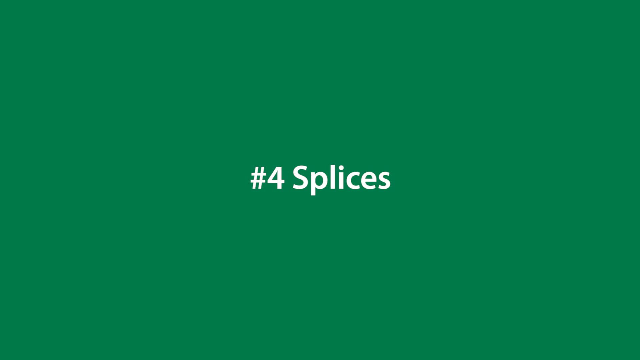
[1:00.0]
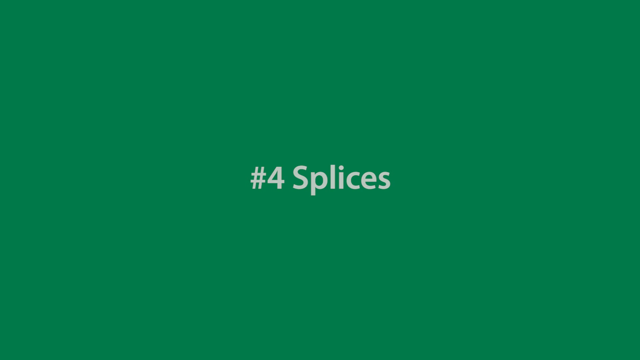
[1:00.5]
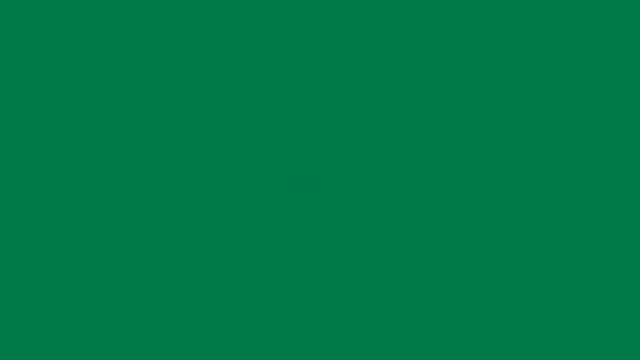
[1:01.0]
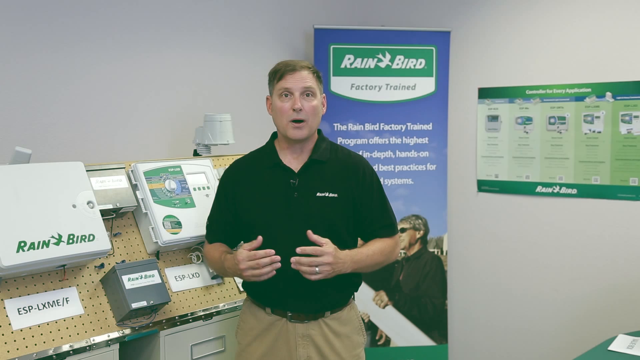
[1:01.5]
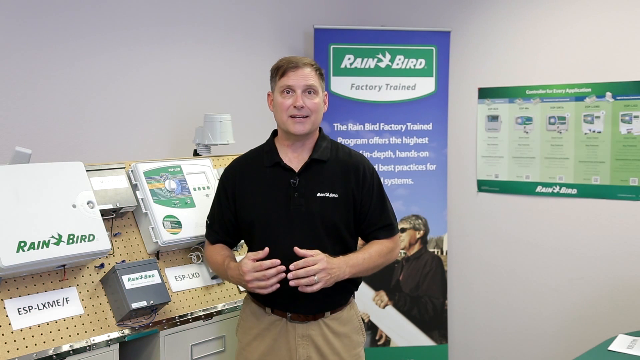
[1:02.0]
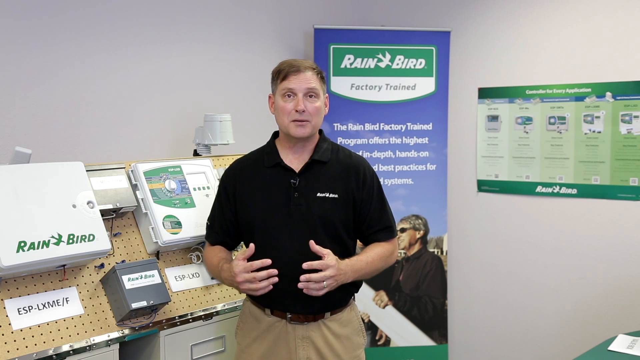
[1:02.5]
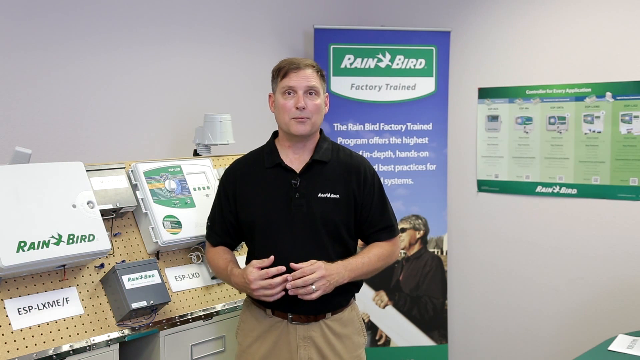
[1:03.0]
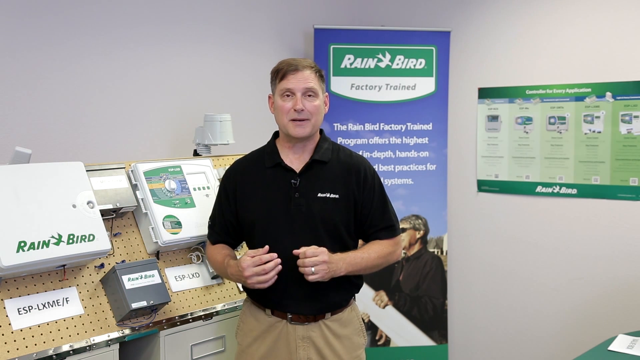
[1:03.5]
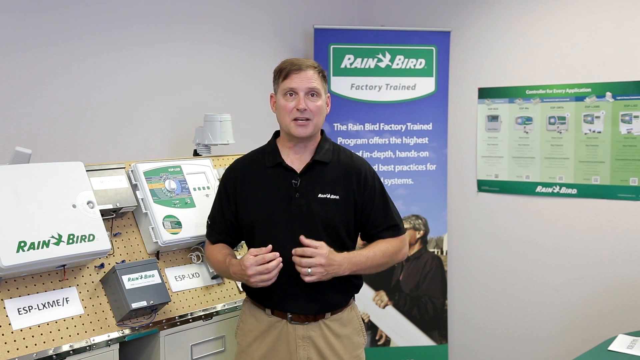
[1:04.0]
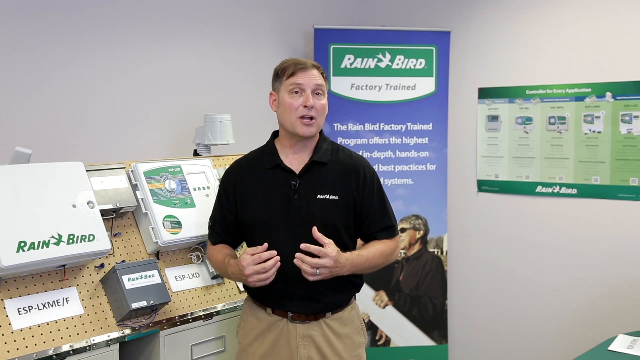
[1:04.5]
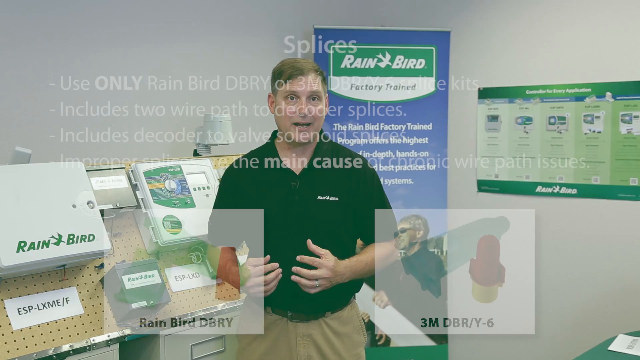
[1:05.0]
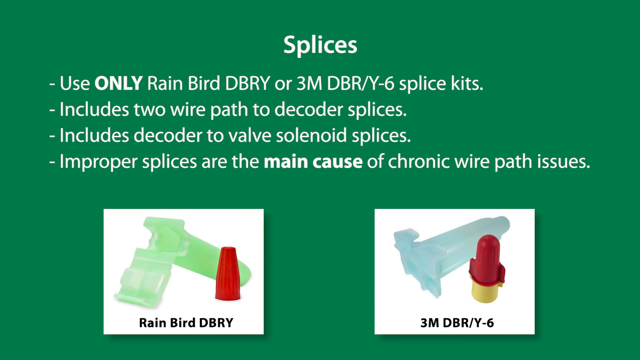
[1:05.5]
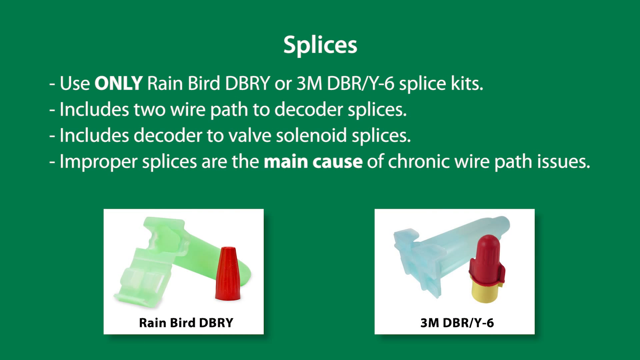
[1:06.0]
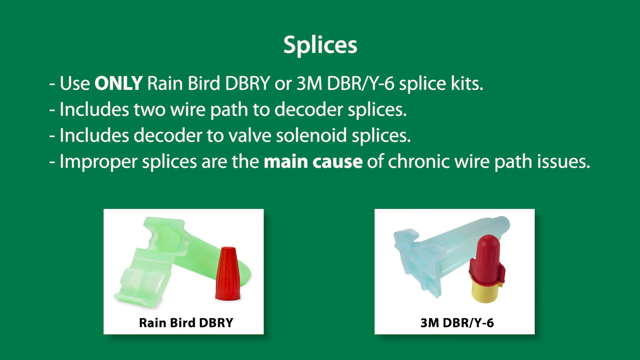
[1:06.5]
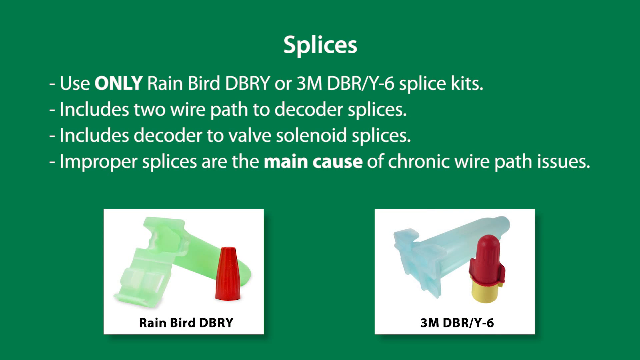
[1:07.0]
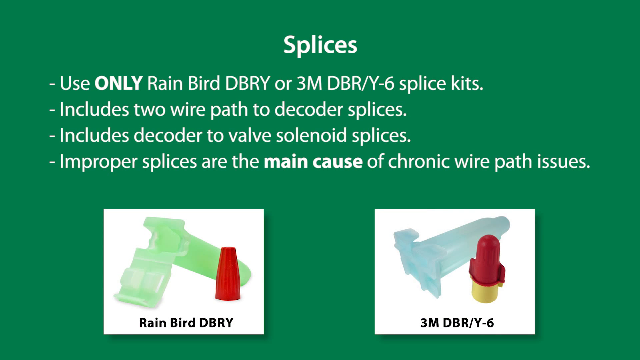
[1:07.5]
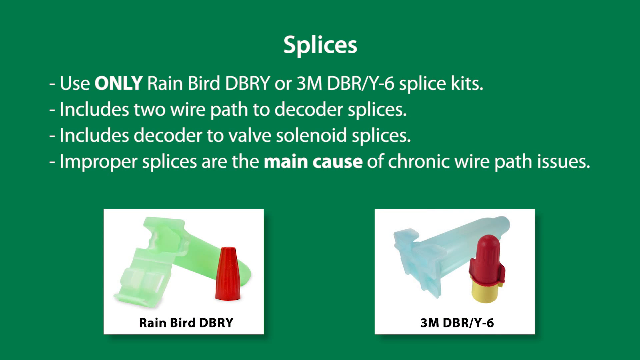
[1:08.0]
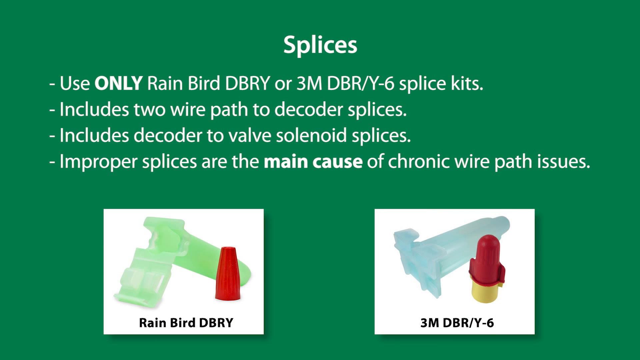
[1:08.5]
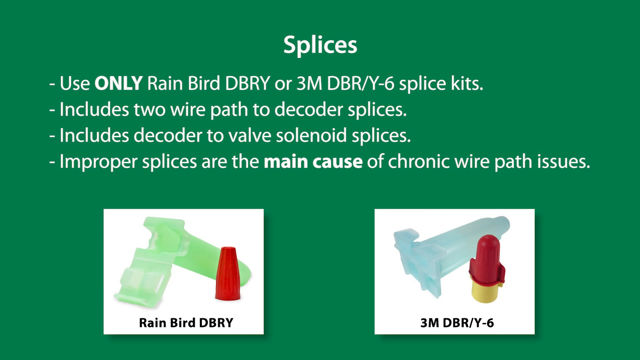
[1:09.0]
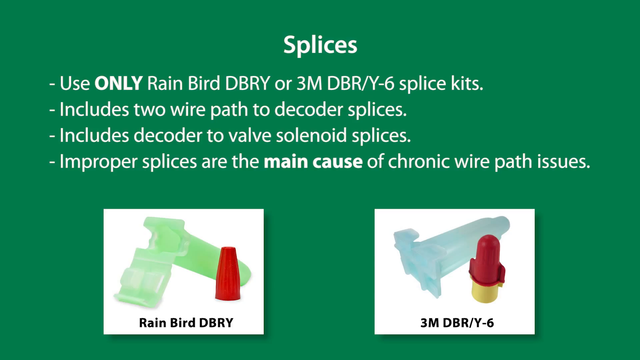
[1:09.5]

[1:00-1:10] A green background screen reads "number four splices." A man speaks to the camera, wearing khaki pants and a black shirt with white writing. He stands in front of a wall with two display boards behind him: one is a Rainbird factory trained board describing the Rainbird factory trained program, and the other shows five control panels with various text below them. On a corkboard behind him are what appear to be two control panels with power devices for them and labels describing their models. A white-looking device is attached either to a wall or to the corkboard behind the man. A title card then reads "splices" in white text, followed by "use only Rainbird DBRY or 3M DBR/Y-6 splice kits," "Includes two wire paths to decoder splices," "Includes decoder to valve solenoid splices," and "Improper splices are the main cause of chronic wire path issues." Two images are at the bottom of the screen. The left image shows a device that appears to have a sort of handle, with a red cap next to it, labeled "Rainbird DBRY." The right image shows a blue device next to a device that looks like a fire hydrant, with a yellow bottom and a red cap, labeled "3M DBR-Y-6."